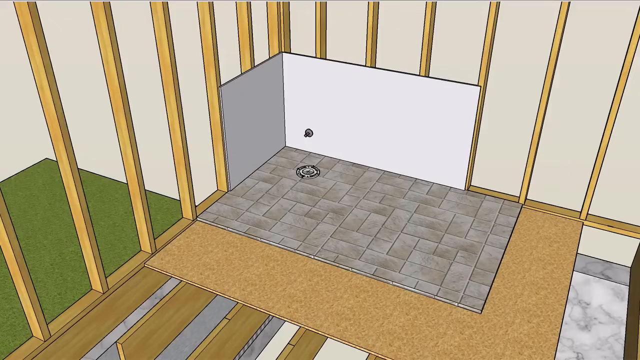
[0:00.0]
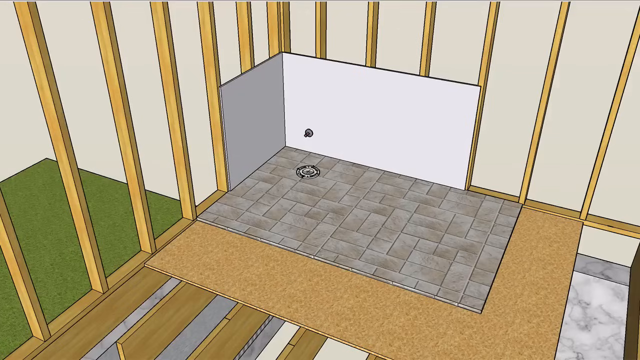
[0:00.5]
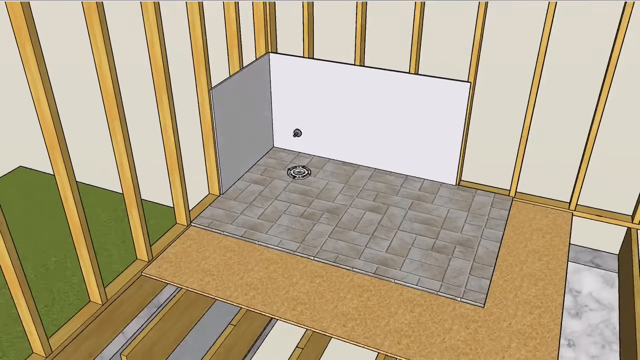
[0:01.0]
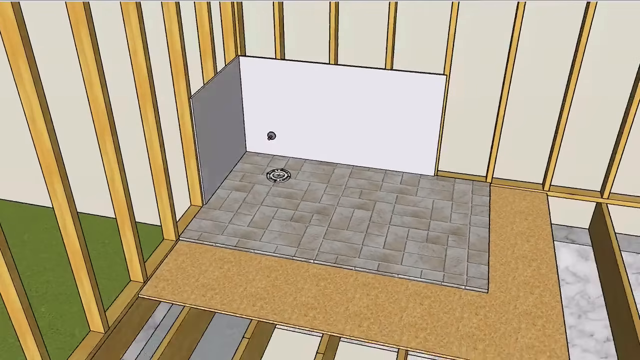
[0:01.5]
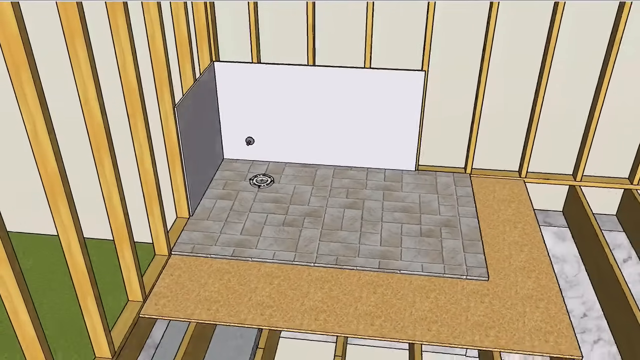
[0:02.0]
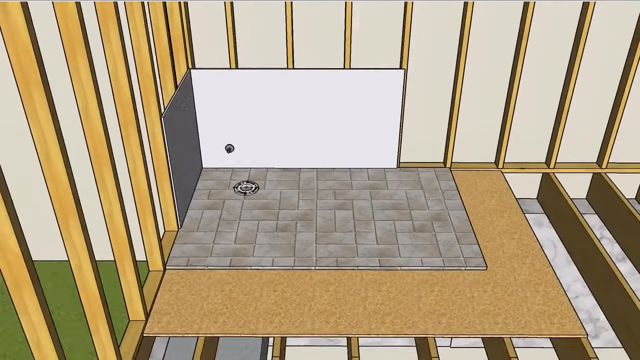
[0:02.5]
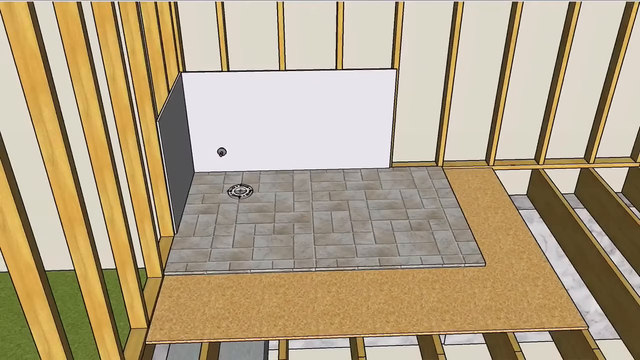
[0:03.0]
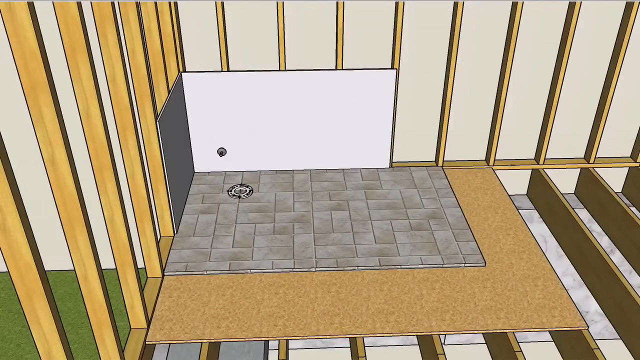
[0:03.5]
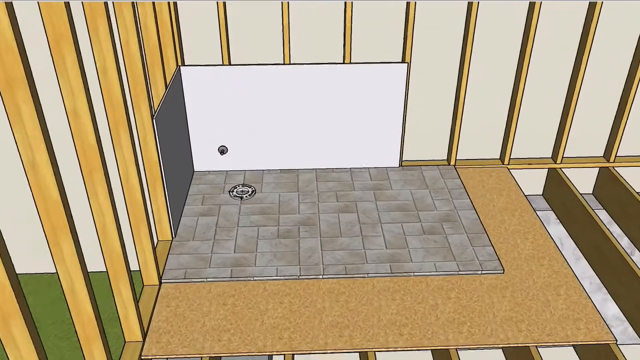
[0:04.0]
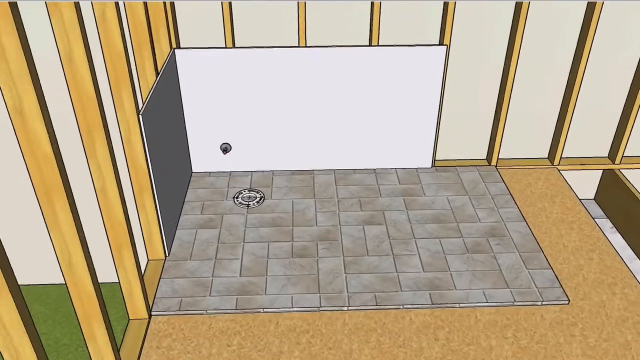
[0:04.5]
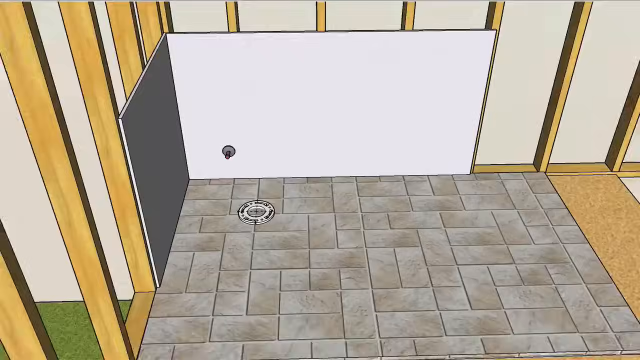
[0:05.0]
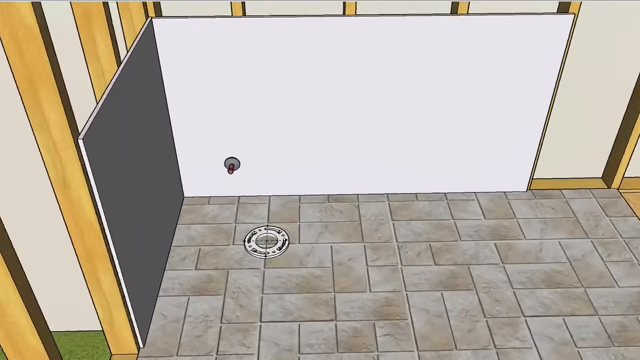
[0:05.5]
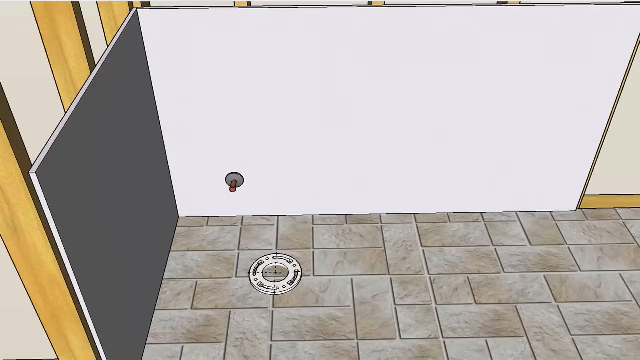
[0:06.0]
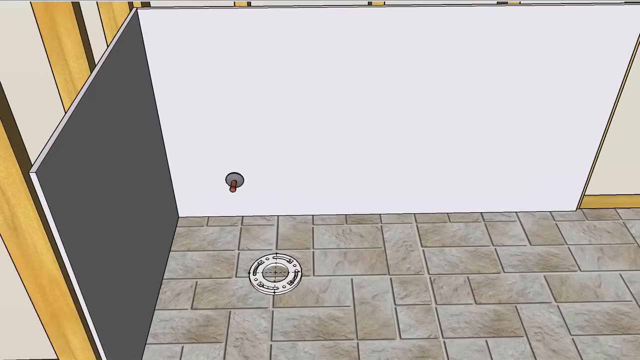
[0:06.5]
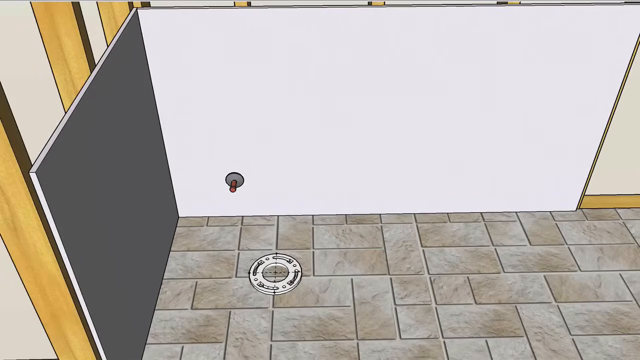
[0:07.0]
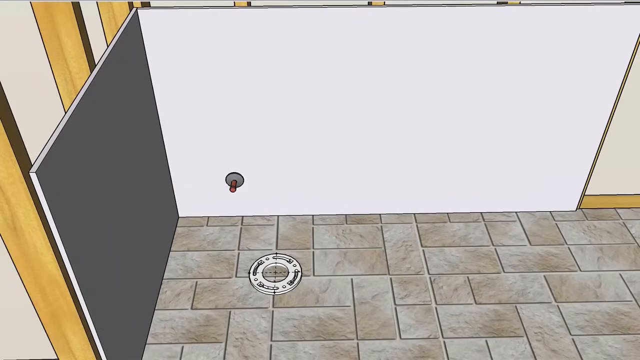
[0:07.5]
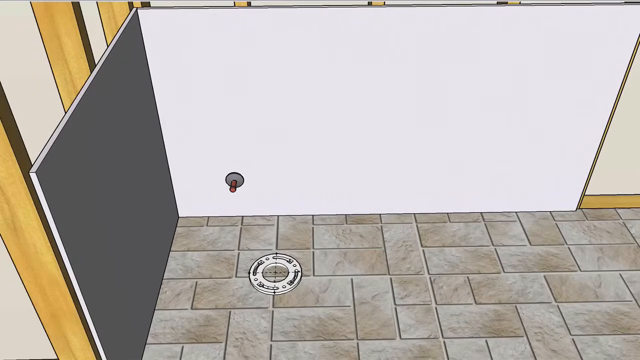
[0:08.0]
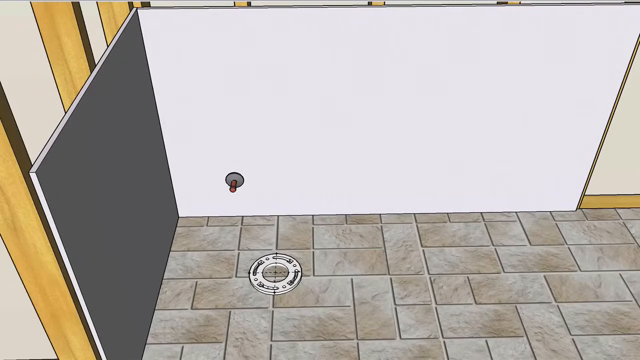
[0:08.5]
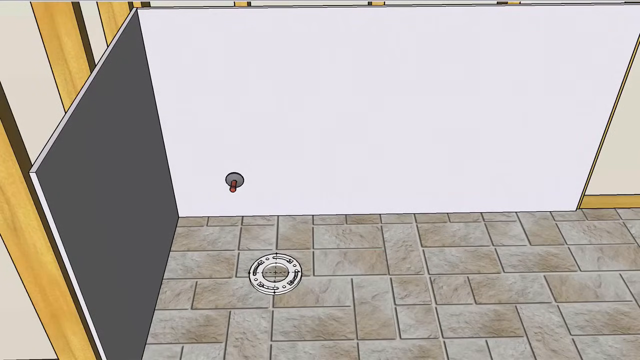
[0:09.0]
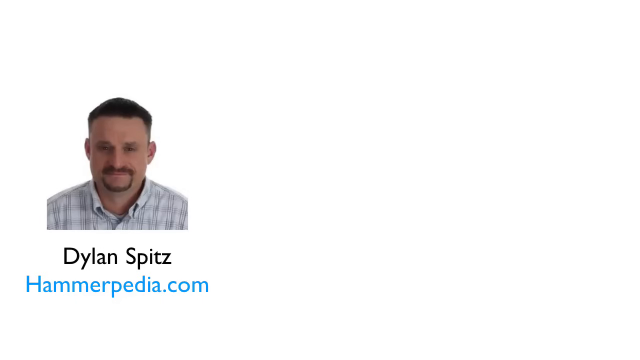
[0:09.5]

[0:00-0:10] An animated structure with wooden frames appears, possibly a model designed for a construction or development project. The model shows wooden flooring and tiles, with what looks like a drain toward the top left of the floor. Outside the framing is what looks like greenery, possibly a green carpet or grass, and it is not clear whether the construction is meant to be indoors or outdoors. The wooden framing is open. Besides the tiles and wooden parts of the floor, there is a patterned section at the bottom of the screen. At one point a close shot of the drain reveals what looks like a red switch on the short white wall beside it. Then a picture of a man, Dylan Spitz from Hamarpedia.com, appears; he has a low cut and some beard around his mouth.